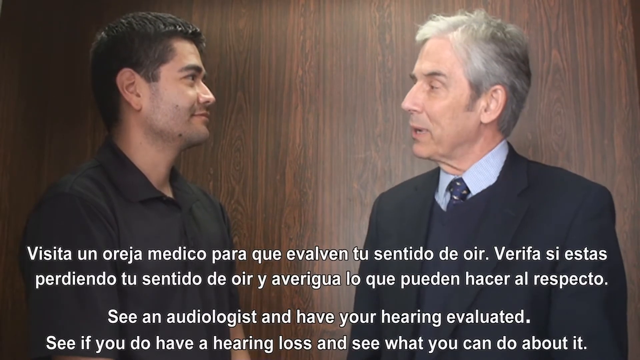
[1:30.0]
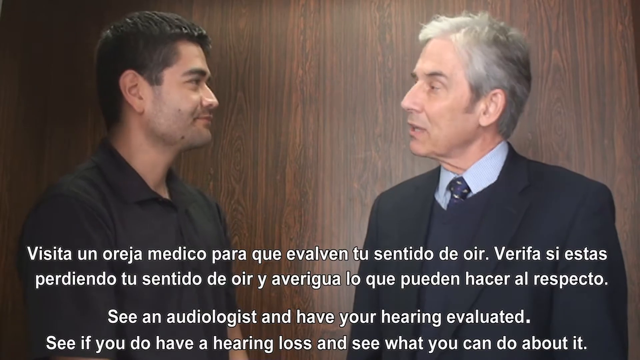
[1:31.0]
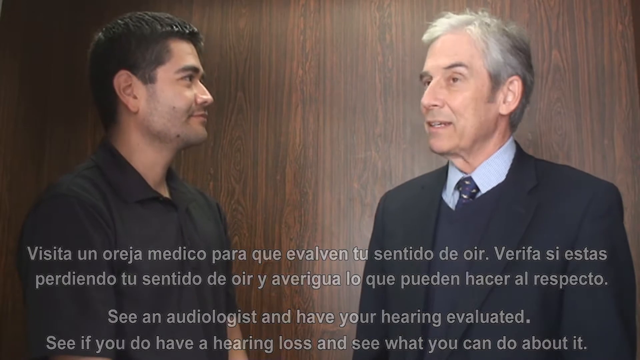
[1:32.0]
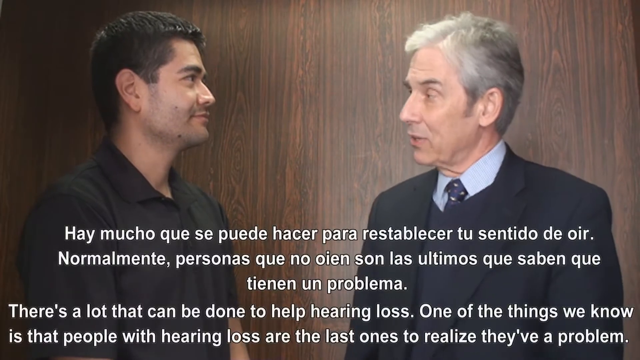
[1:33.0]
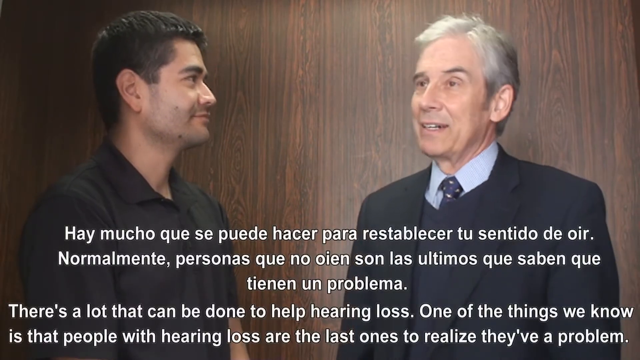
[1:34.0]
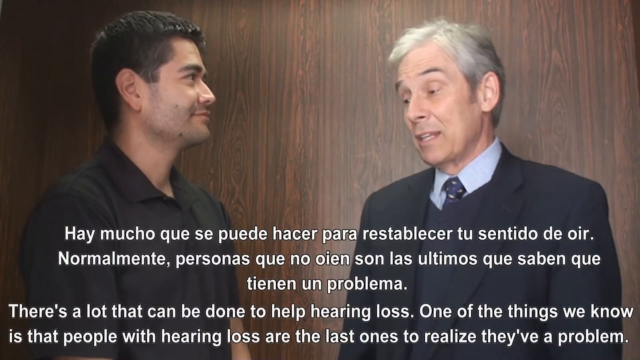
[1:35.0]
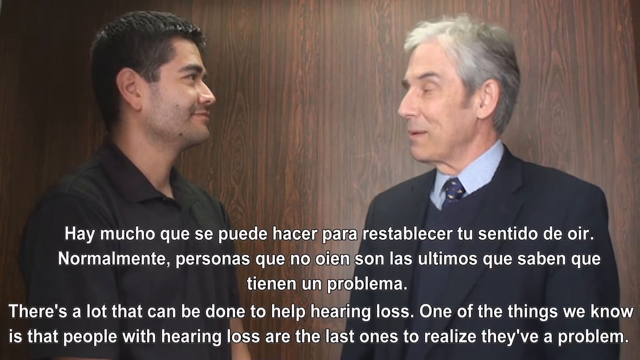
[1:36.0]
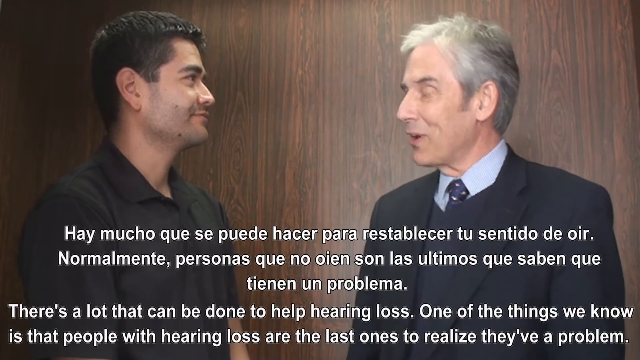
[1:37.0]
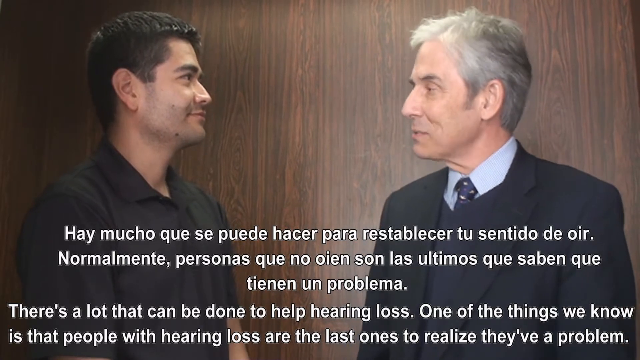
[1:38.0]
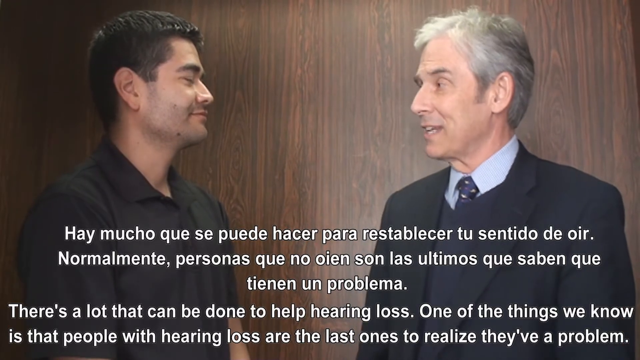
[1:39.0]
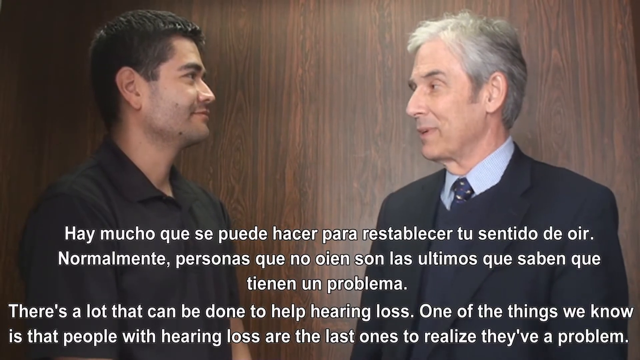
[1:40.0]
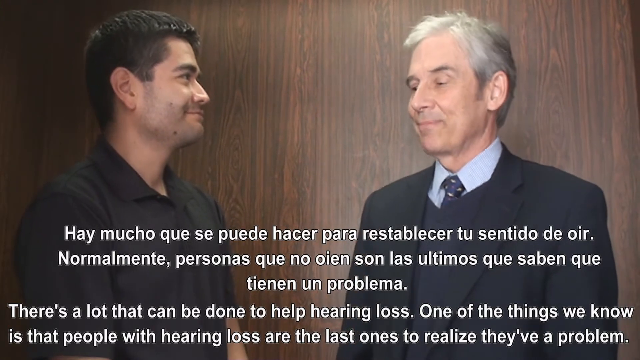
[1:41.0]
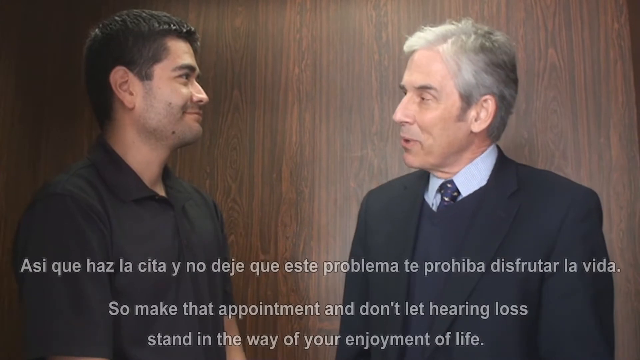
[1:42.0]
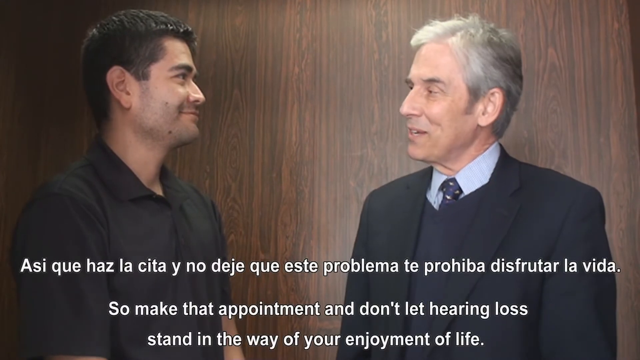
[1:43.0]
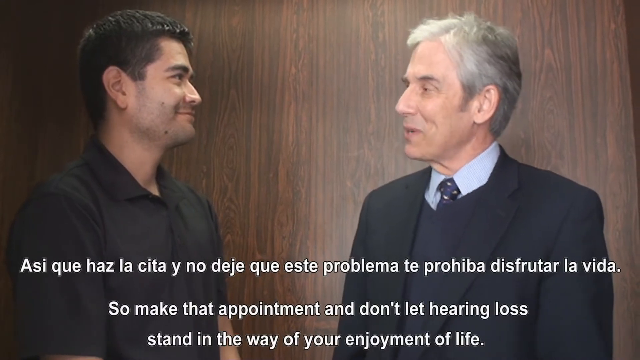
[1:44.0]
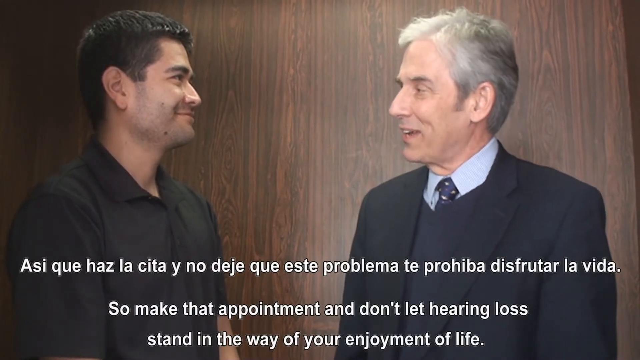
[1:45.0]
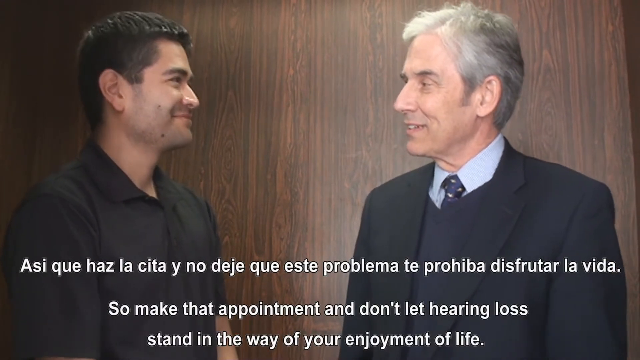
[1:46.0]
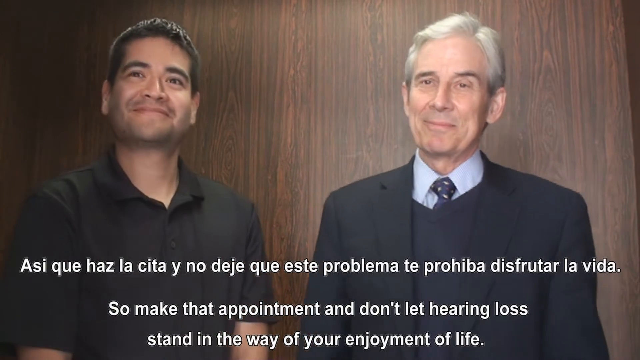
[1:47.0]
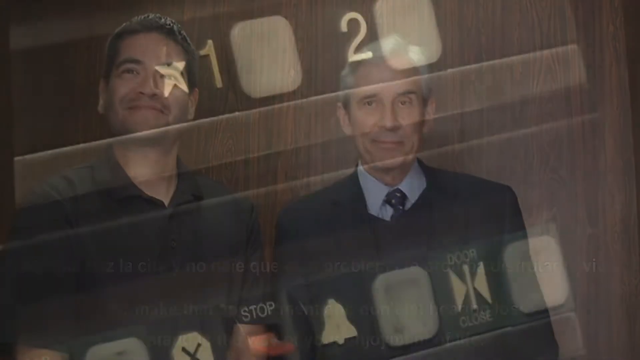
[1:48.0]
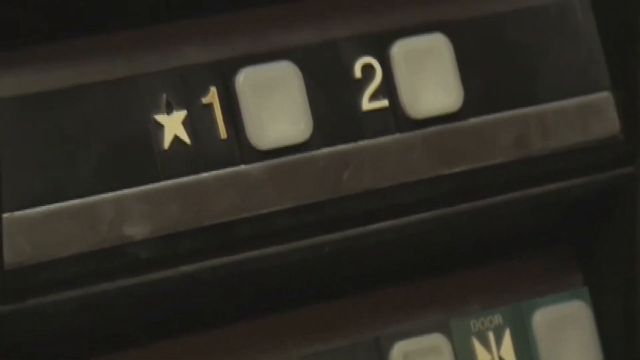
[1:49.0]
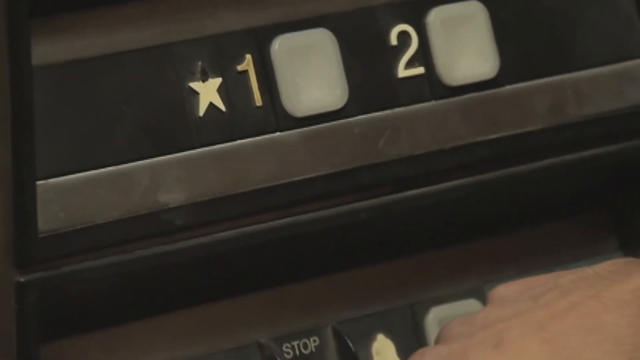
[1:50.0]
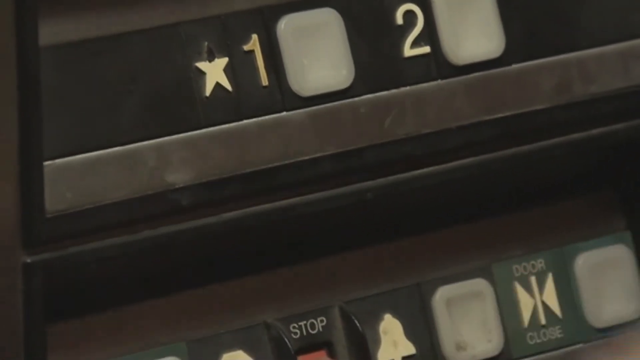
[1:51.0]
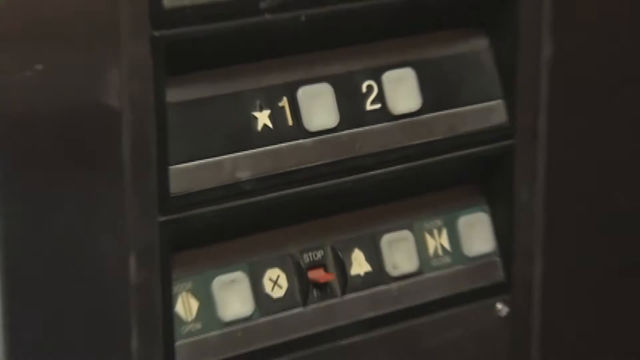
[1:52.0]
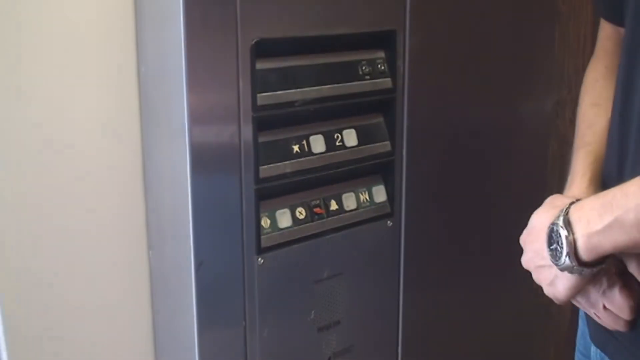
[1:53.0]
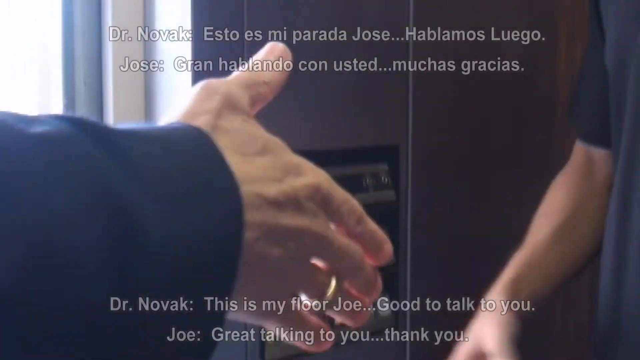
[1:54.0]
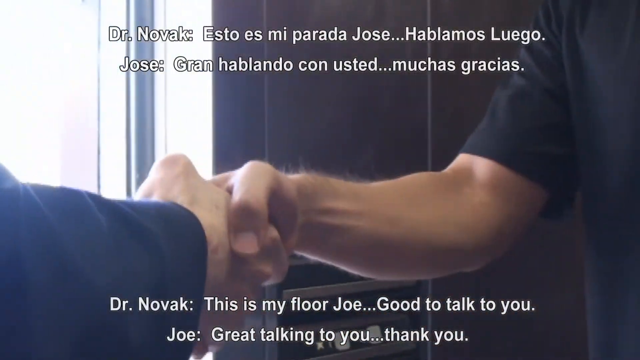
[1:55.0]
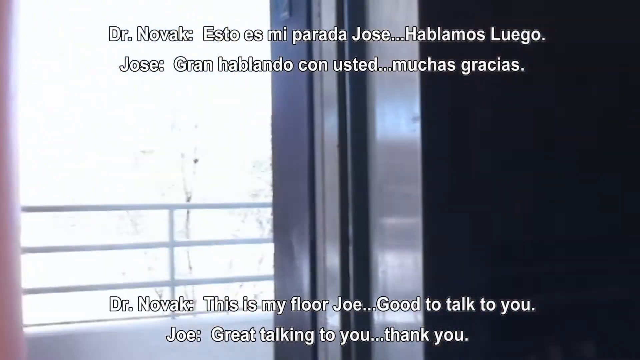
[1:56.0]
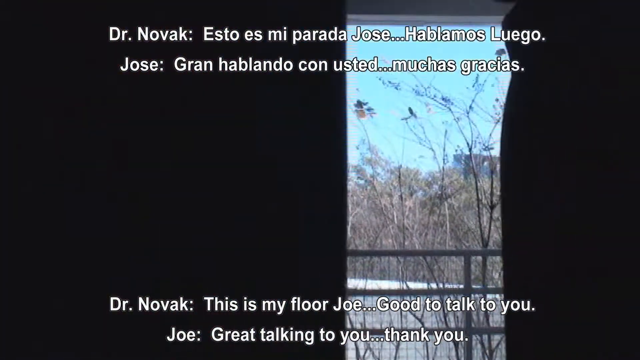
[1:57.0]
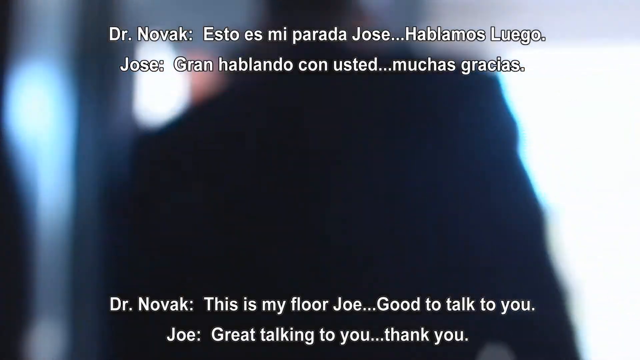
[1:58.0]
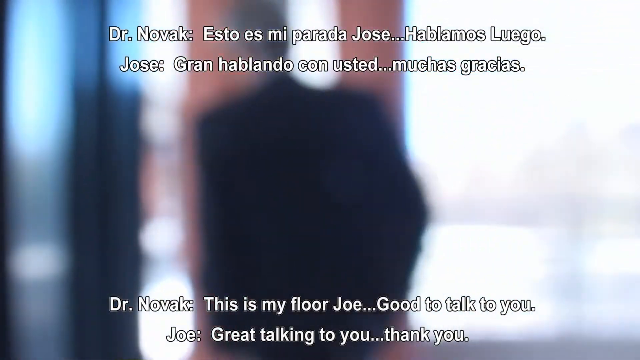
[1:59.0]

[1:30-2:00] The doctor is saying "see an audiologist and have your hearing evaluated. See if you do have a hearing loss and see what you can do about it." He wears a blue suit and is talking to a man in a black shirt. The subtitles at the bottom continue: "there is a lot that can be done to help hearing loss" and "one of the things we know is that people with hearing loss are the last ones to realize they have a problem", followed by "so make that appointment". The elevator panel shows buttons 1 and 2, with a star close to 1. The man pushes stop and they get out of the elevator. The doctor says "this is my floor Joe. Good to talk to you," and Joe says "great talking to you. Thank you." They exit the elevator, and sunlight comes from outside into the elevator.